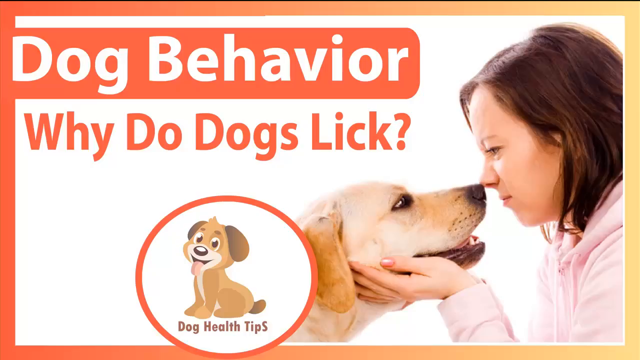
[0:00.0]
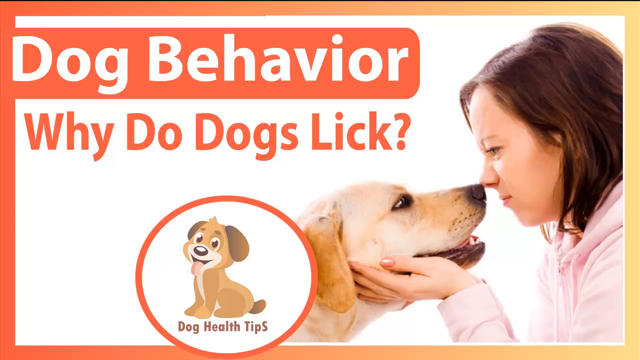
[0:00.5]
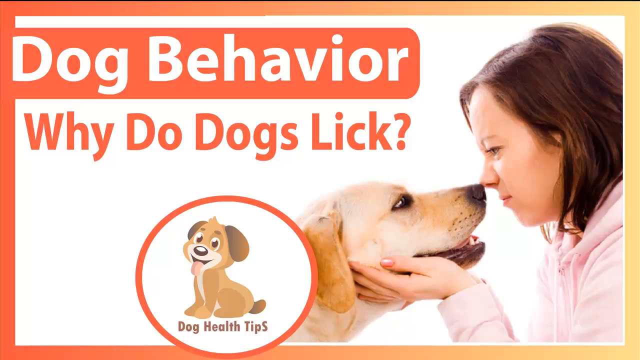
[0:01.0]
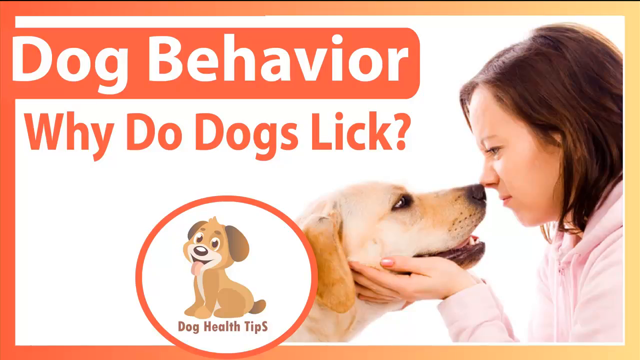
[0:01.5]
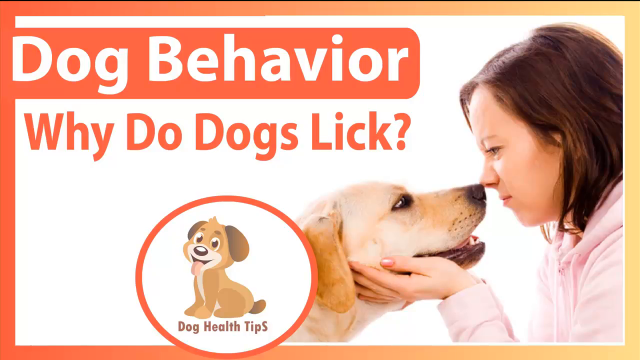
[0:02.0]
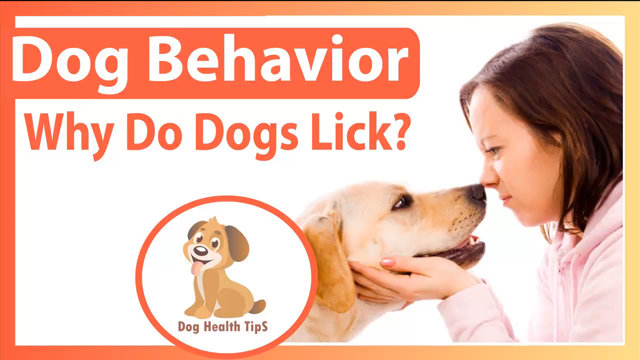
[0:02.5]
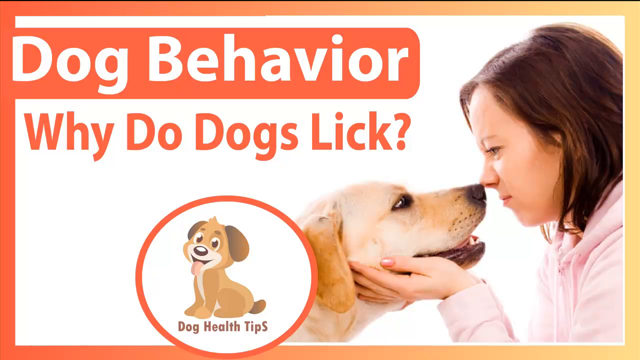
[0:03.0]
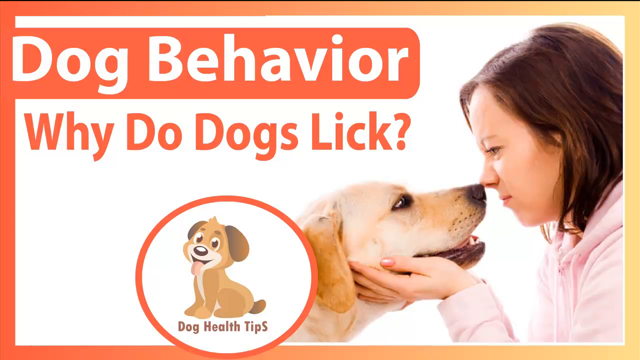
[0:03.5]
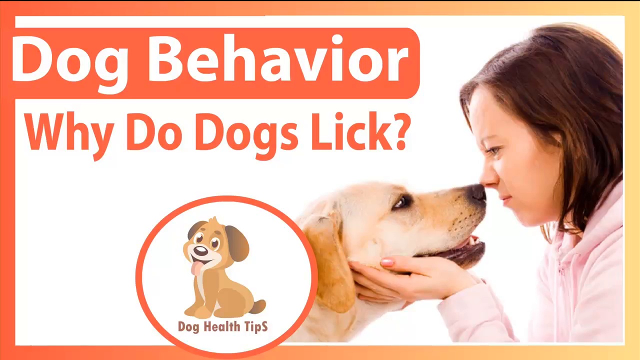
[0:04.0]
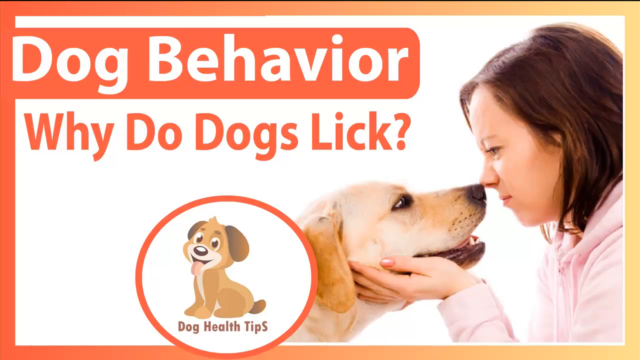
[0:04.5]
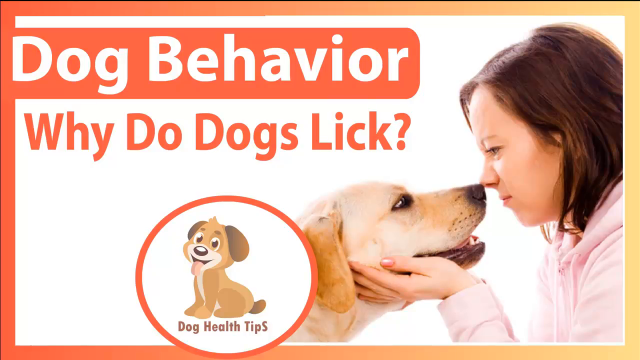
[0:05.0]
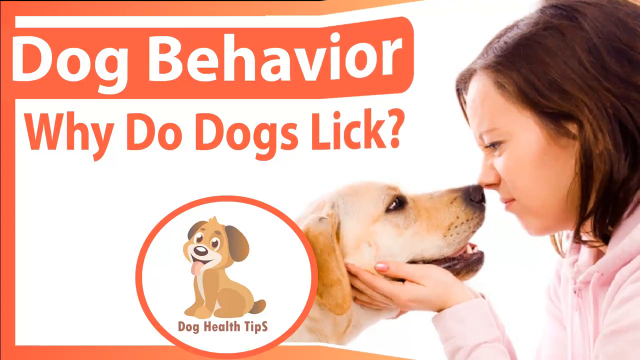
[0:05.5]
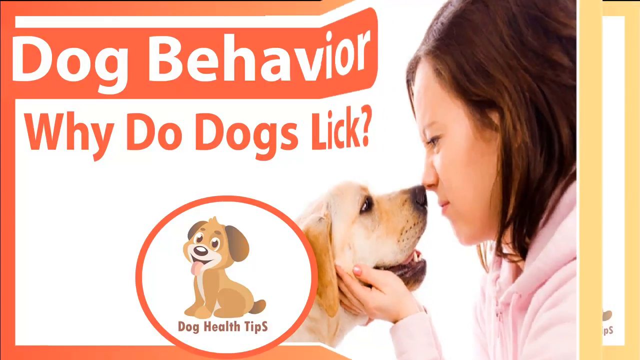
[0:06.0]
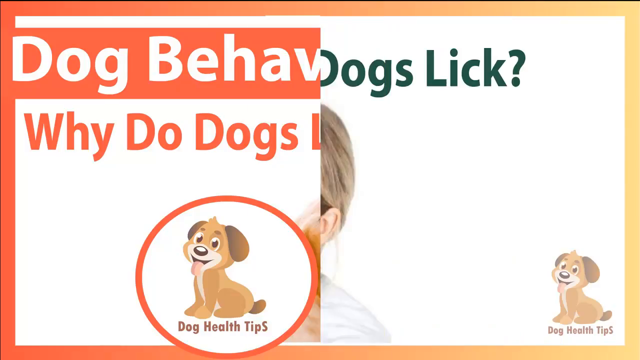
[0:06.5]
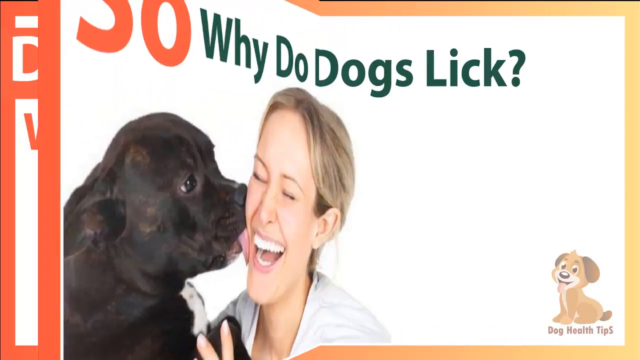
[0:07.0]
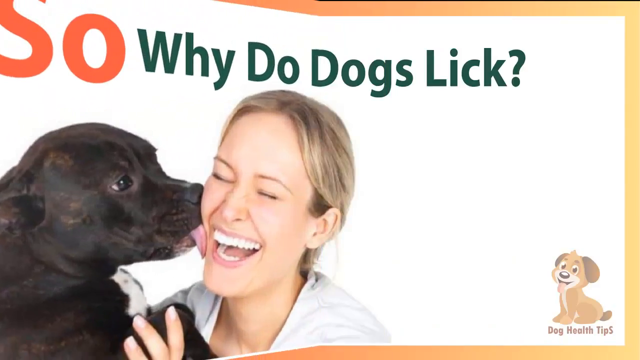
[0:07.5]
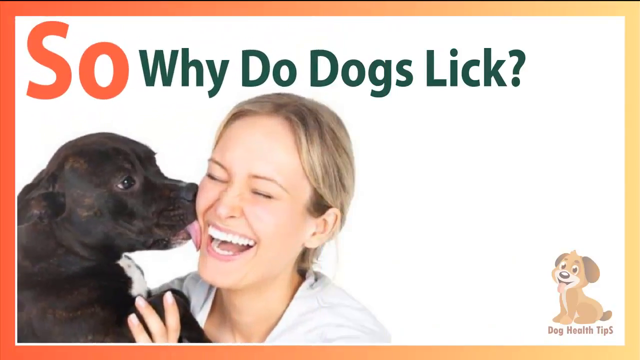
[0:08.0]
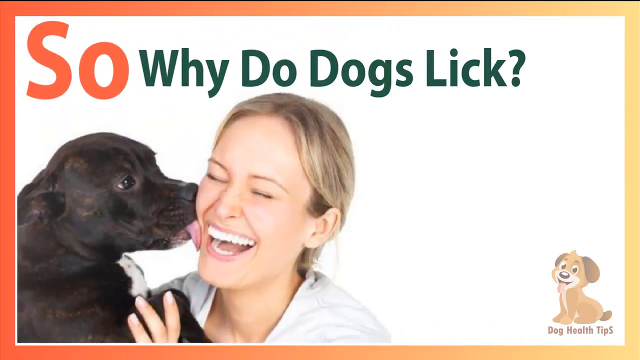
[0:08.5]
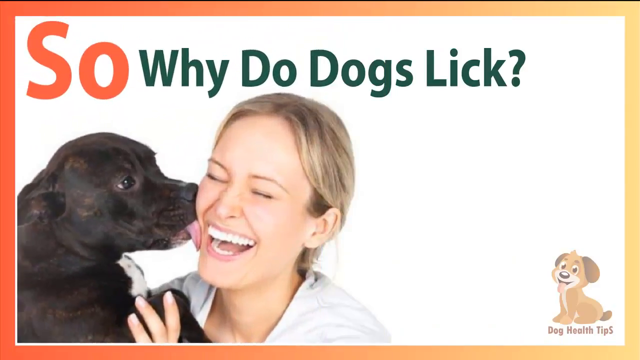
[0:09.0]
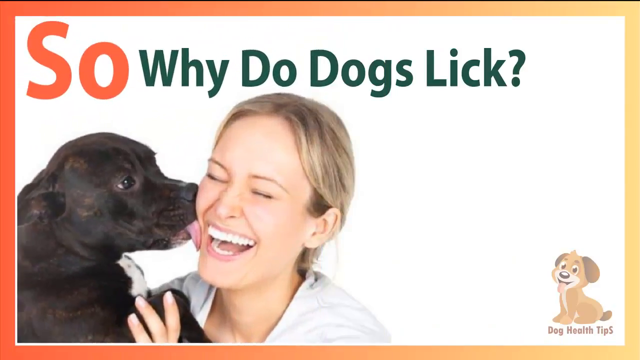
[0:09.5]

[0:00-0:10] On a white background there is a woman holding a dog's face; the dog and the woman are nose to nose. Text on the screen reads "dog behaviour, why do dogs lick?" Inside a circle is a logo of a dog, with text underneath reading "dog health tips." The page folds over like a book. The next scene is a white background with a woman whose face a dog is licking, and the text reads "so why do dogs lick?" The small dog logo is in the bottom right-hand corner.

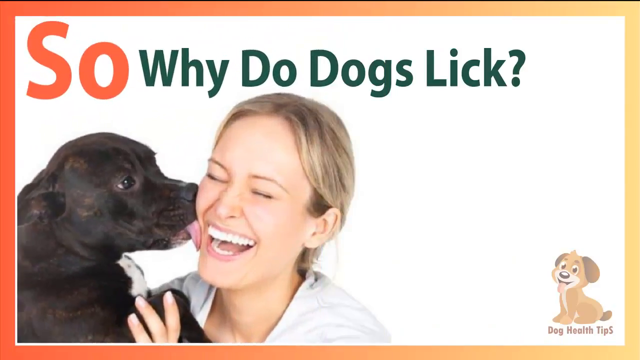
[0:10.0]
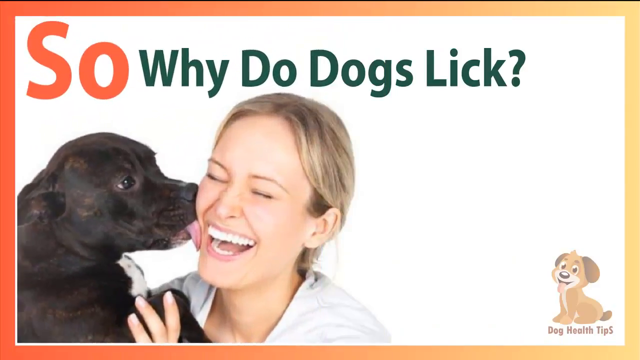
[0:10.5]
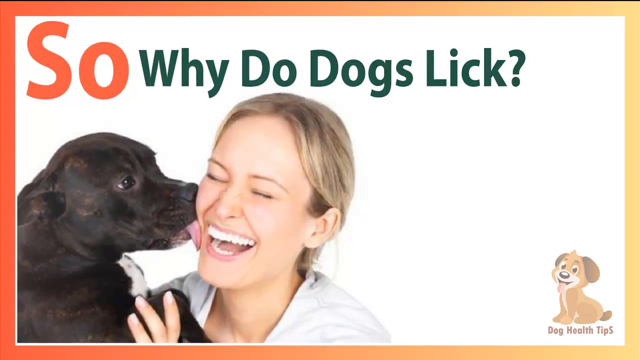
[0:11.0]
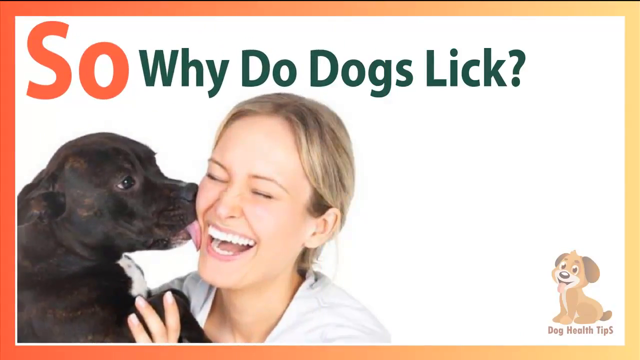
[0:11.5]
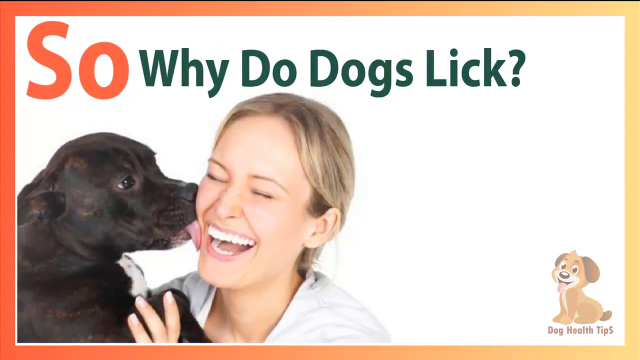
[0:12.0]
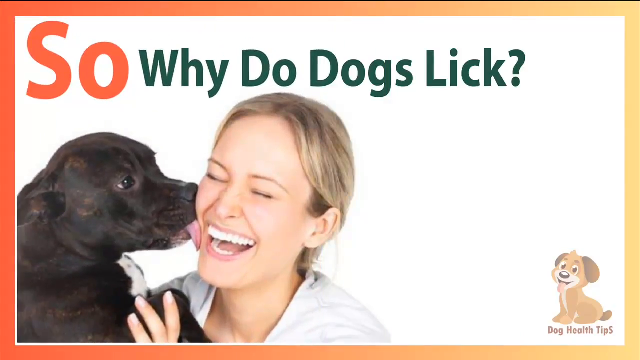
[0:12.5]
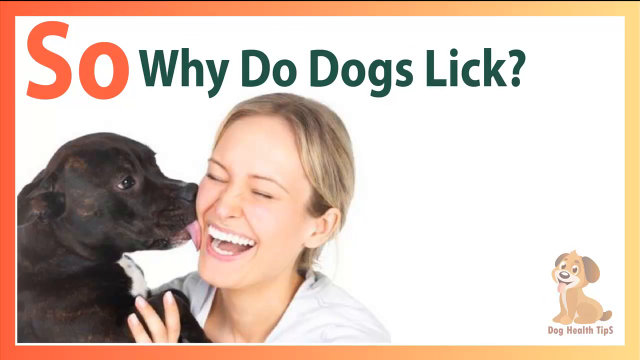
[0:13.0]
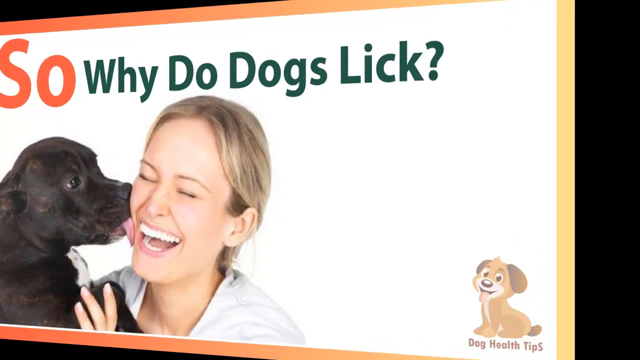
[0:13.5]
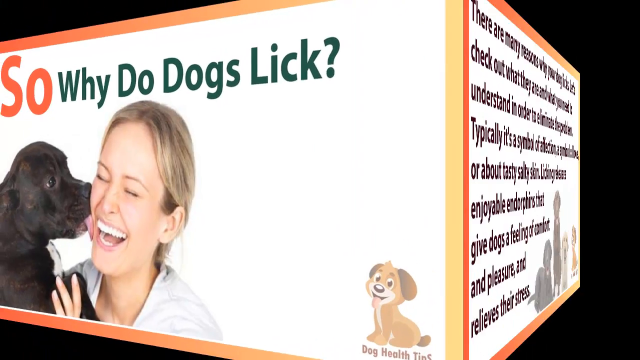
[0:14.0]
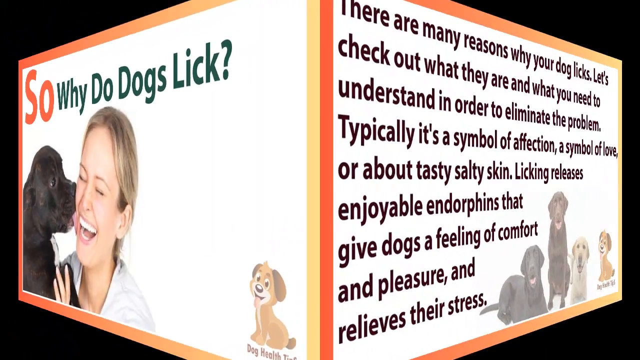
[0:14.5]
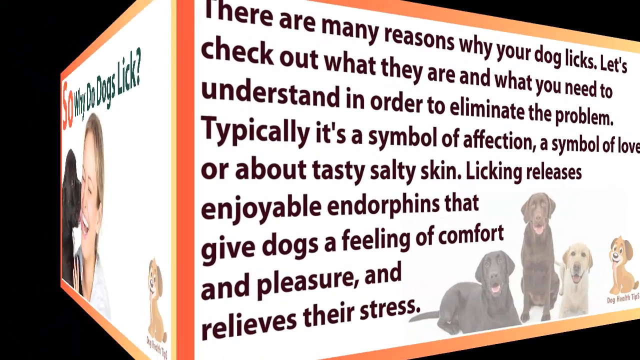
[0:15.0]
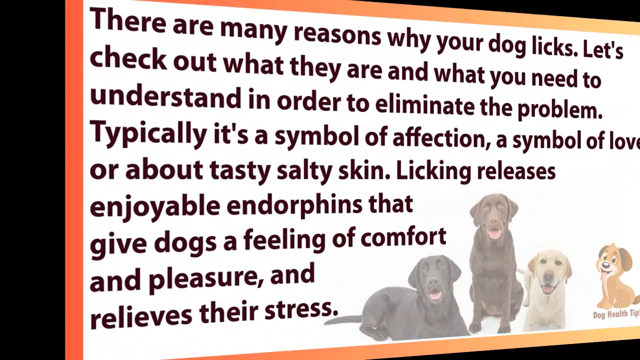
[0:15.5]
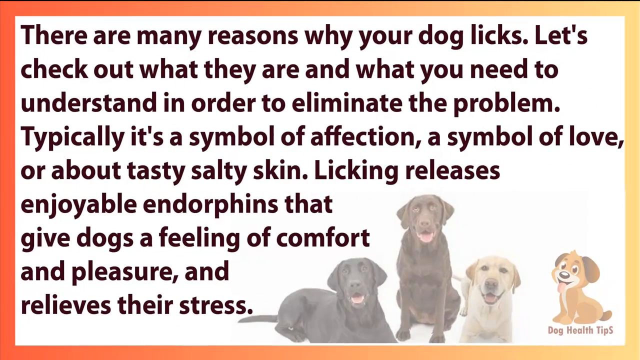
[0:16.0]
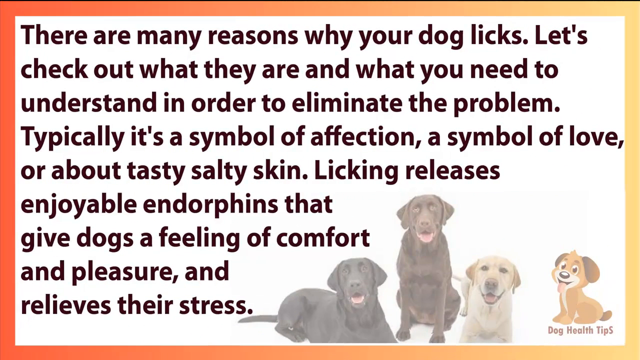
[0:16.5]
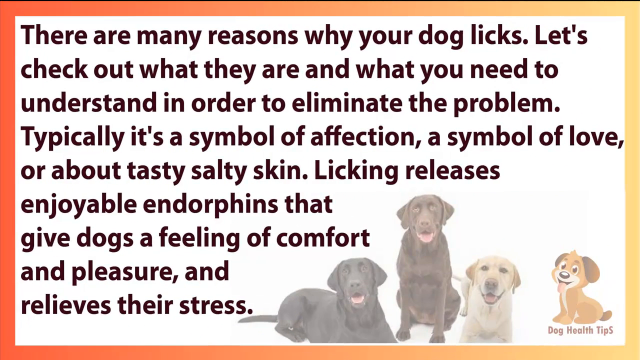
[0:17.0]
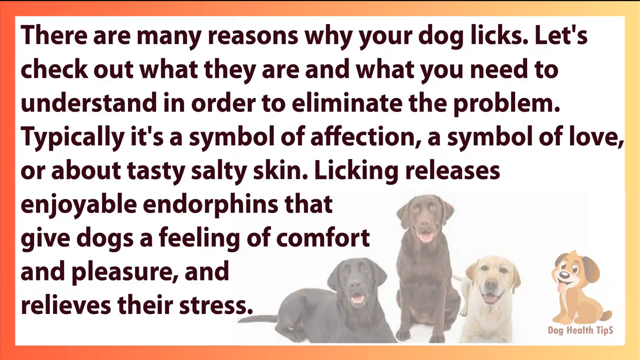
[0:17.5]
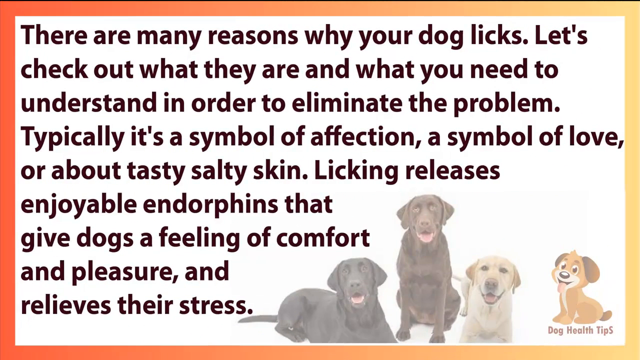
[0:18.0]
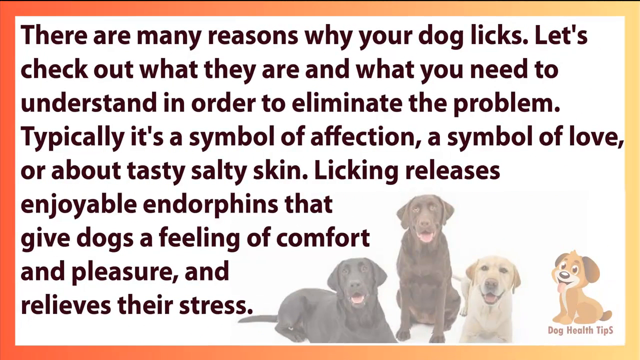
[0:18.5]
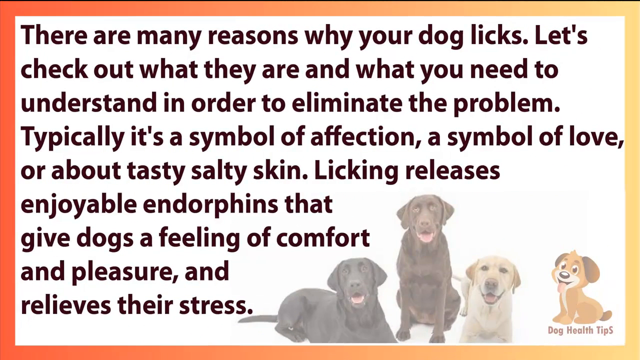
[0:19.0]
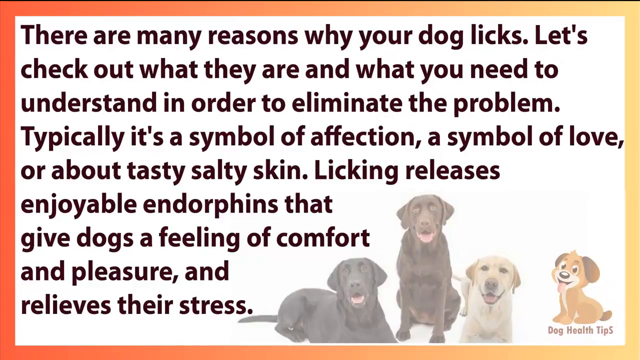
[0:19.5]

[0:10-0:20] On a white screen, a blonde woman is being licked on the cheek by a dog. The text reads "so why do dogs lick?" and a logo of a dog is in the bottom right-hand corner. The screen pans around to a white background with more text and three dogs at the bottom of the screen. The text reads: "There are many reasons why your dog licks. Let's check out what they are and what you need to understand in order to eliminate the problem. Typically it's a symbol of affection, a symbol of love or about tasty salty skin. Licking releases enjoyable endorphins that give dogs a feeling of comfort and pleasure and relieves their stress."